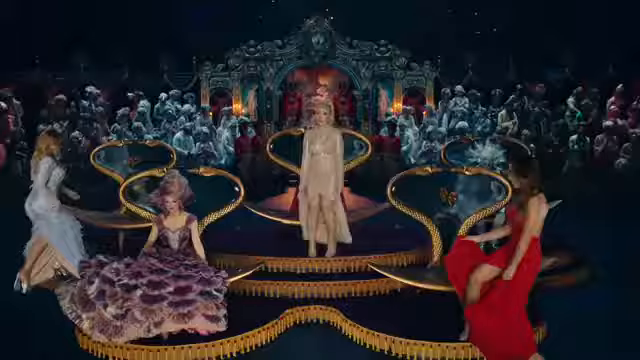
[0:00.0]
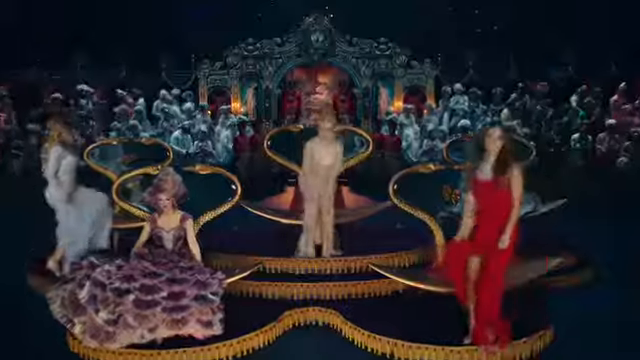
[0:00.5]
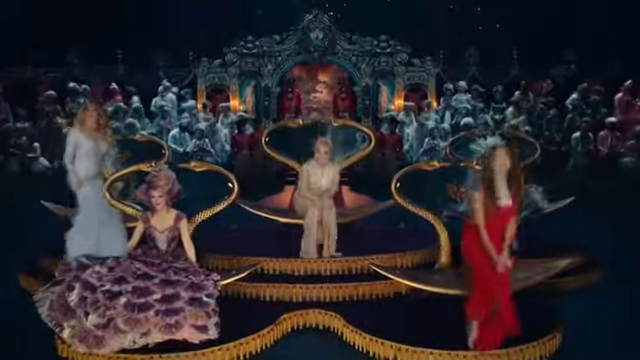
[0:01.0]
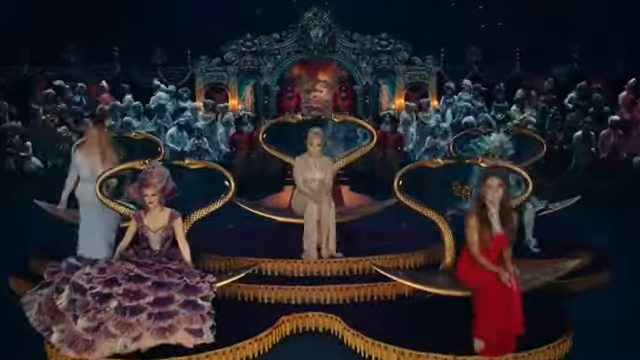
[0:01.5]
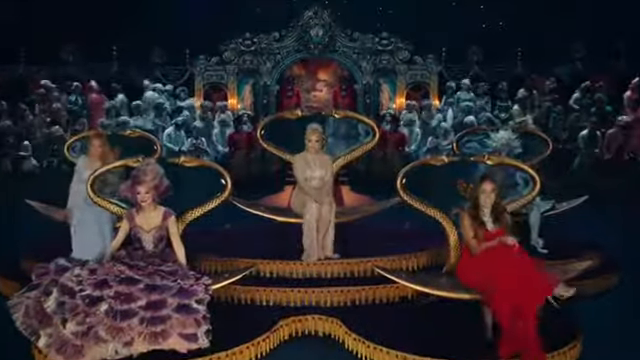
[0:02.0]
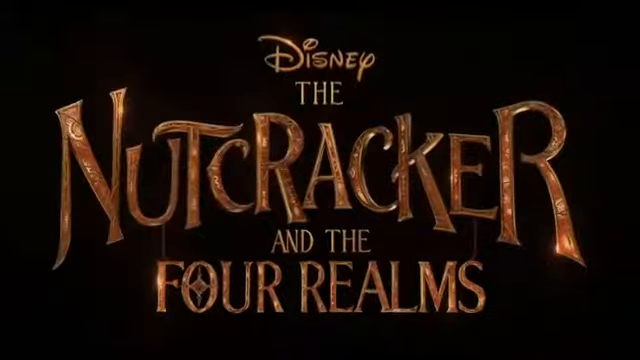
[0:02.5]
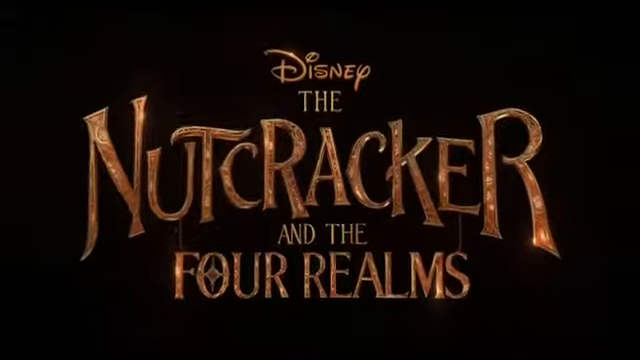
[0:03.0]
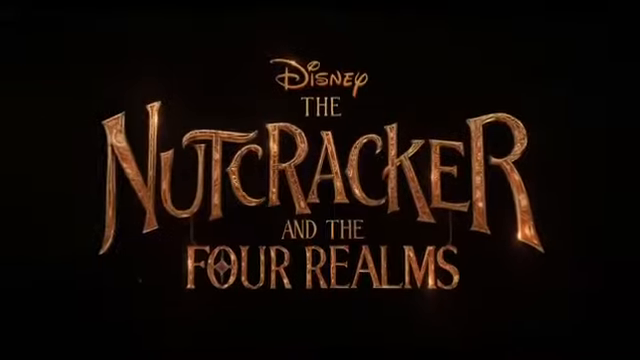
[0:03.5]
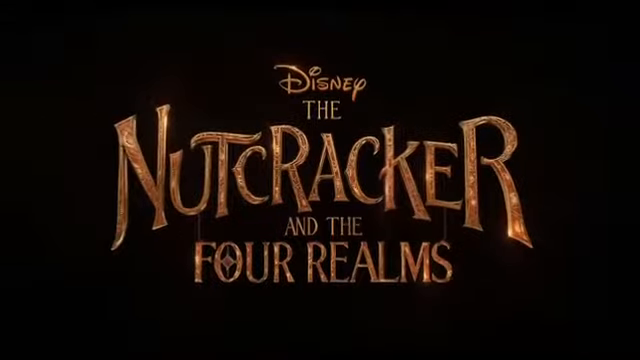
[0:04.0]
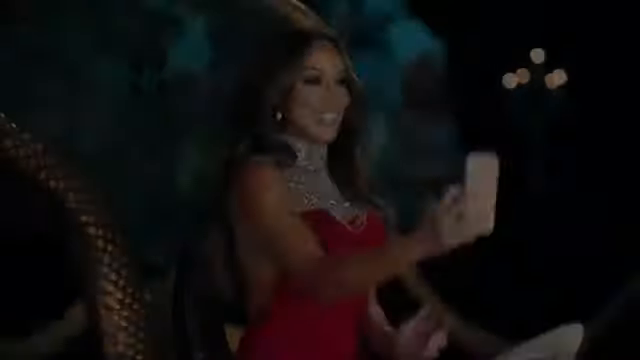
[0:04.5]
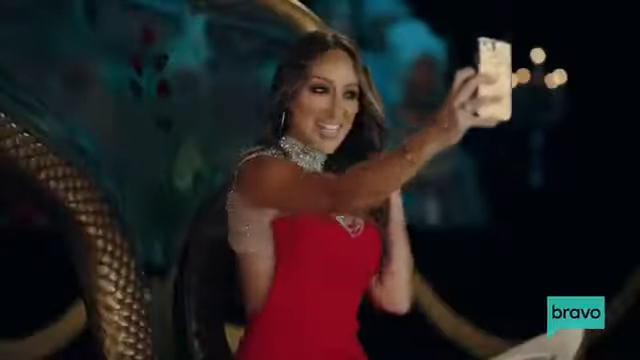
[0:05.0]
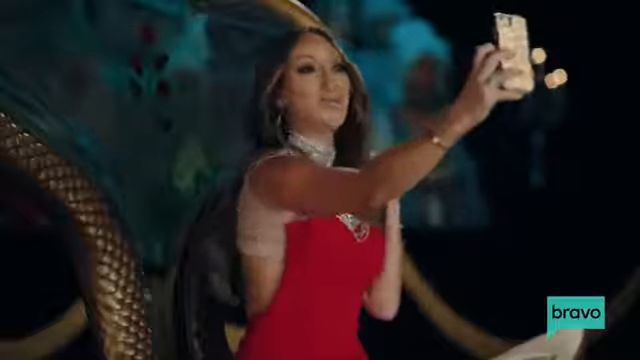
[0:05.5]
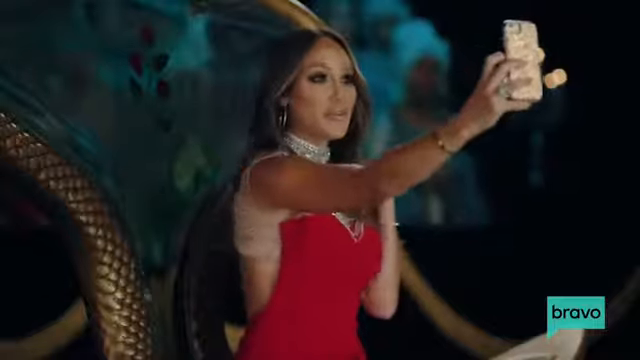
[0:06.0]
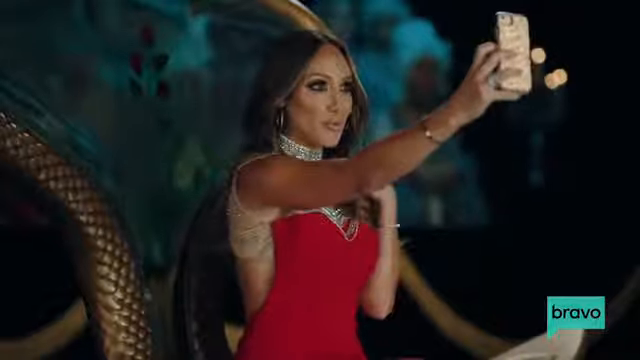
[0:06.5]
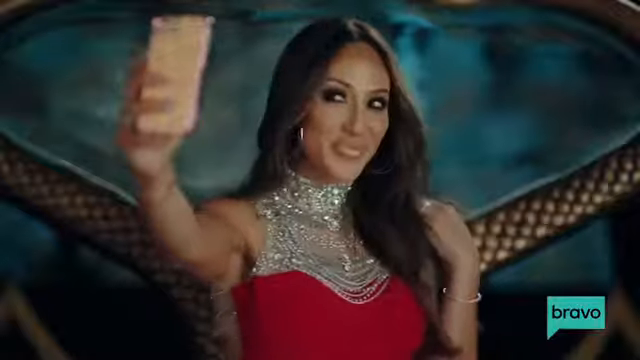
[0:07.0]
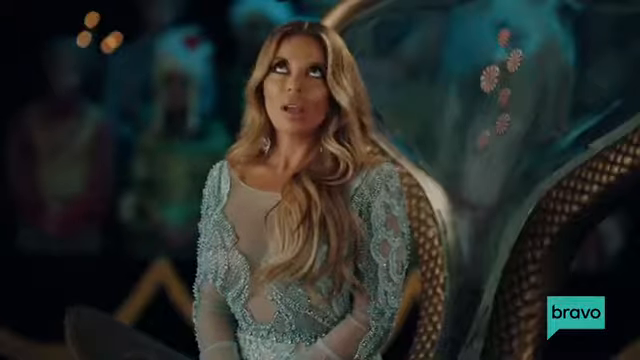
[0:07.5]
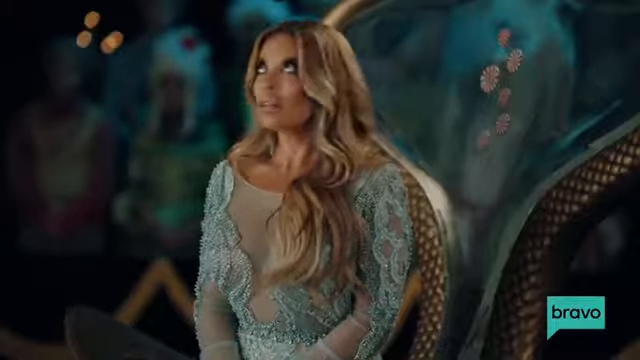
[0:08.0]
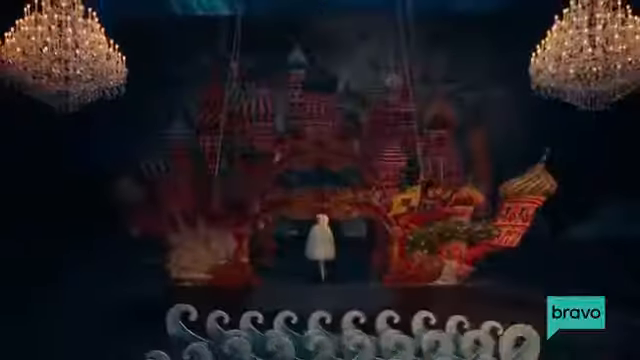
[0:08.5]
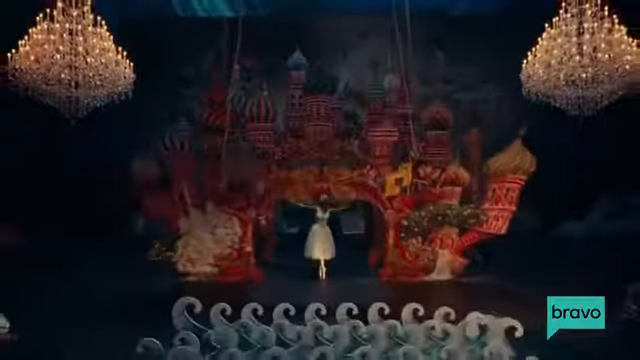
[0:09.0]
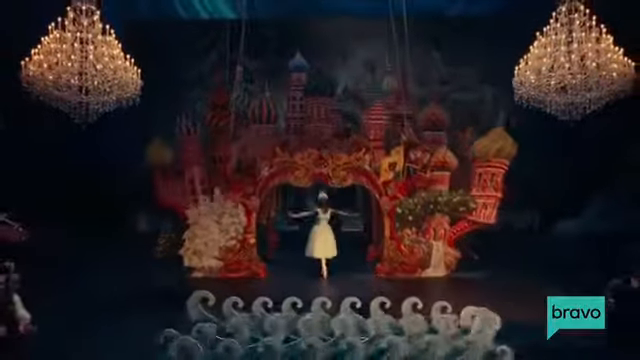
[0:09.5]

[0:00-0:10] What looks like an image from a show or a movie appears, with a very whimsical background and a stage area. Women wearing large gowns come and sit on chairs in the foreground. The video then cuts to what looks like a title card for Disney's The Nutcracker and the Four Realms. Next comes what seems to be a commercial for Bravo, with "Bravo" visible at the bottom right. A woman, apparently from one of the Housewives franchises, holds out a camera in her right hand and takes a selfie. It cuts to a different woman rolling her eyes, then to the other women, including a quick shot in which they appear to be pulling up a background, like a set piece, and putting it in place.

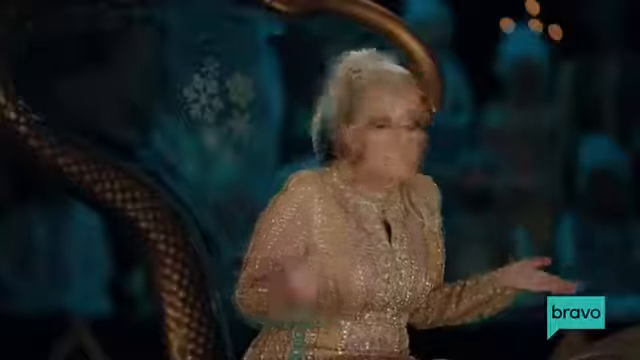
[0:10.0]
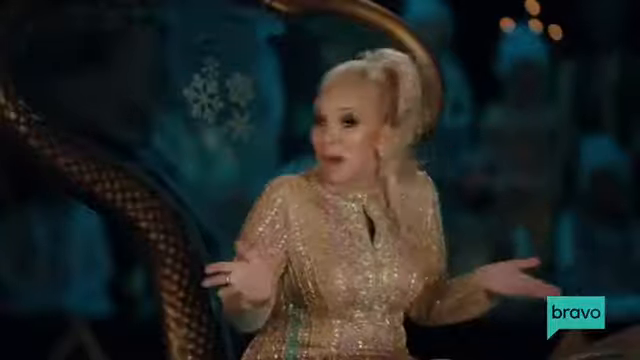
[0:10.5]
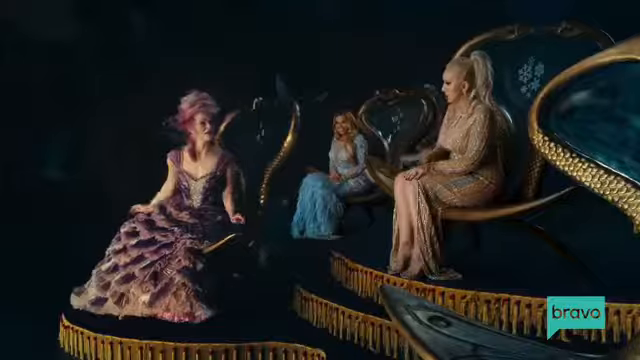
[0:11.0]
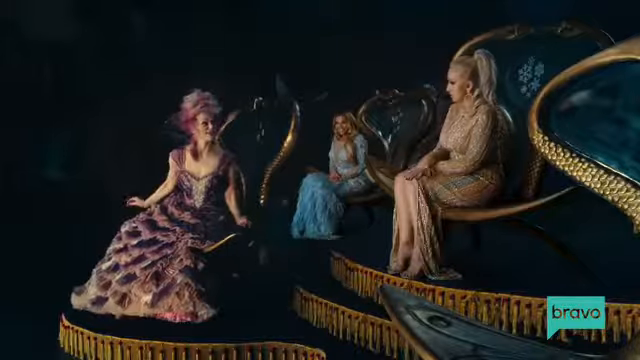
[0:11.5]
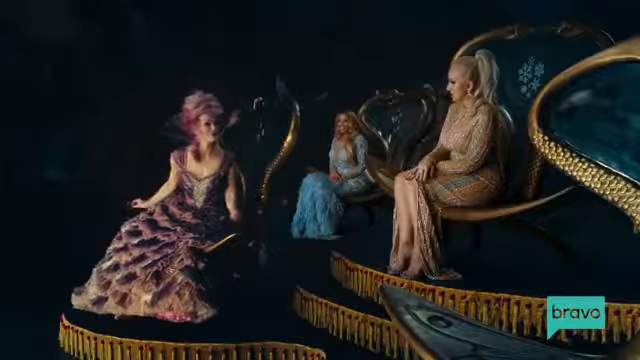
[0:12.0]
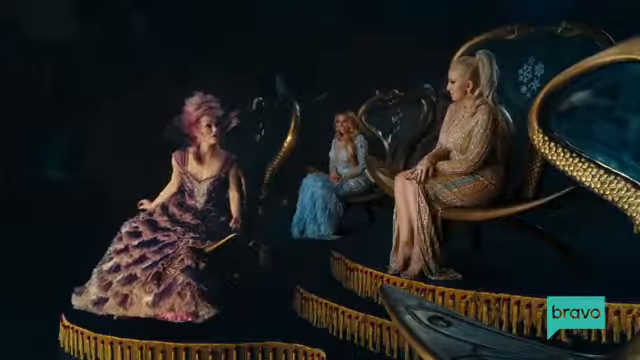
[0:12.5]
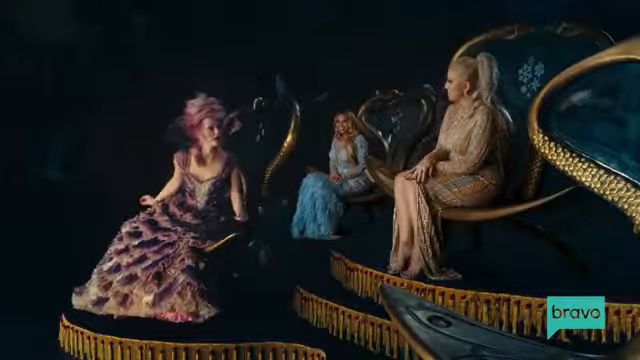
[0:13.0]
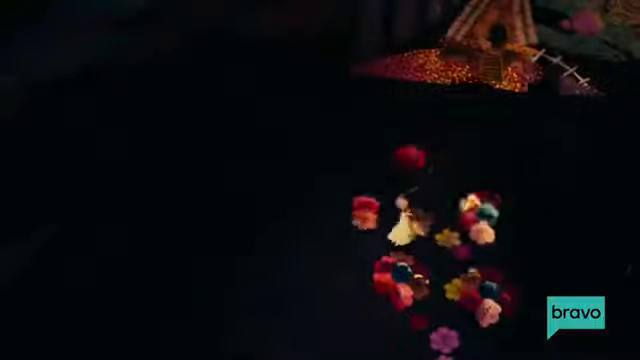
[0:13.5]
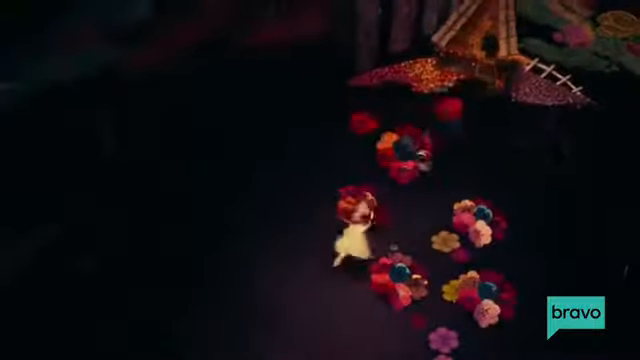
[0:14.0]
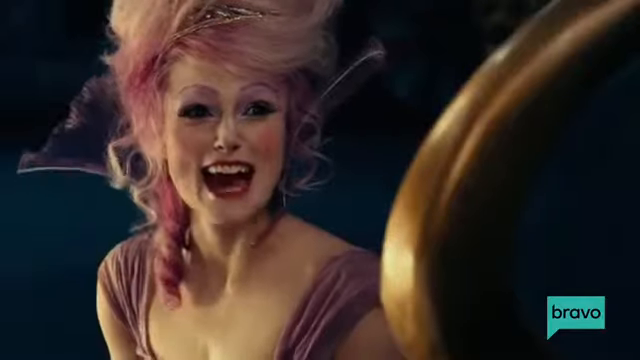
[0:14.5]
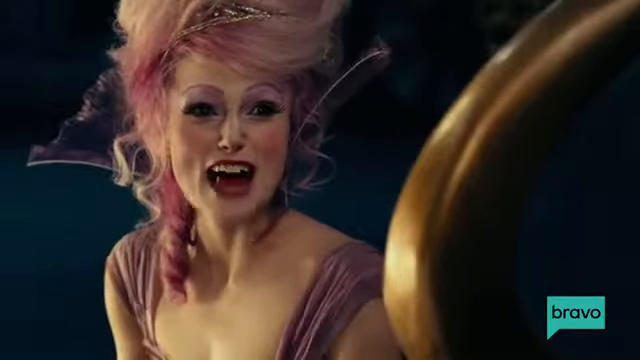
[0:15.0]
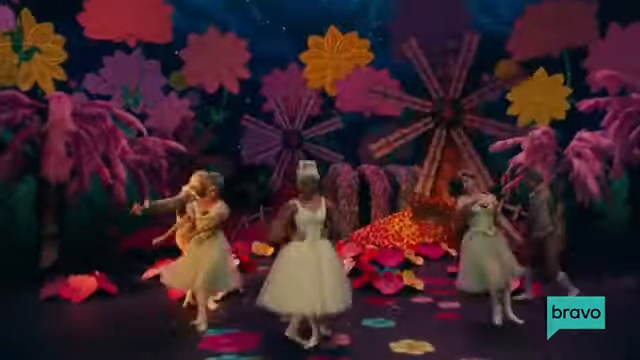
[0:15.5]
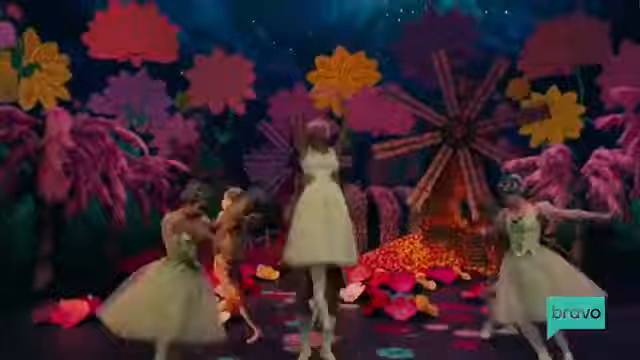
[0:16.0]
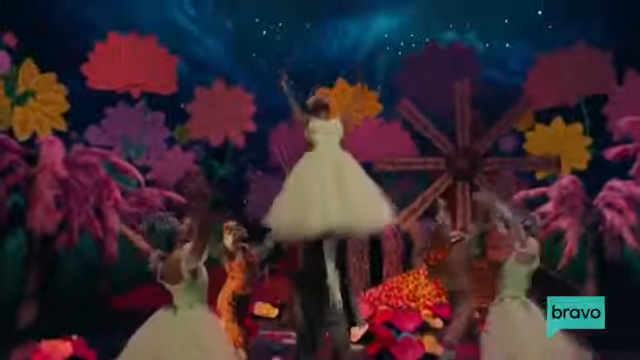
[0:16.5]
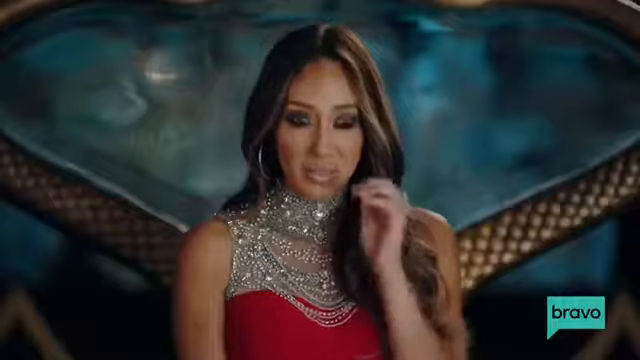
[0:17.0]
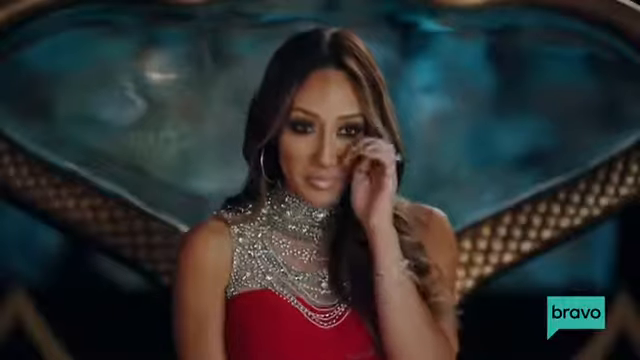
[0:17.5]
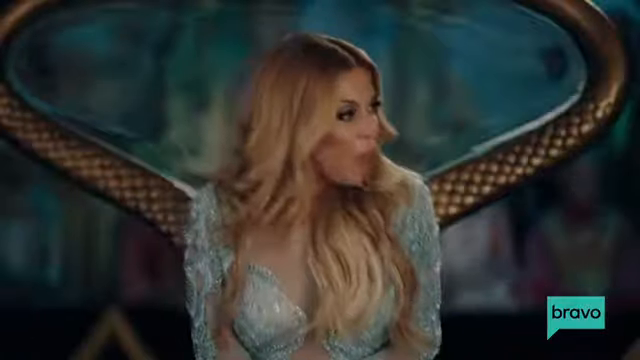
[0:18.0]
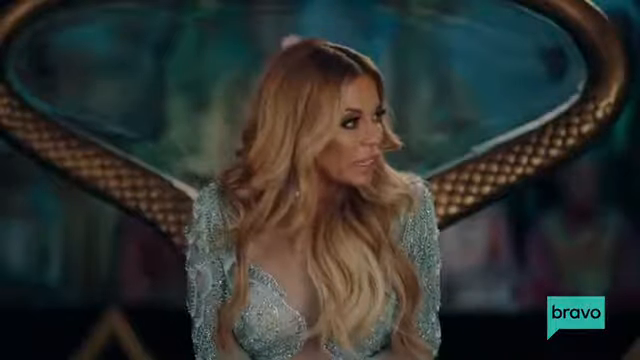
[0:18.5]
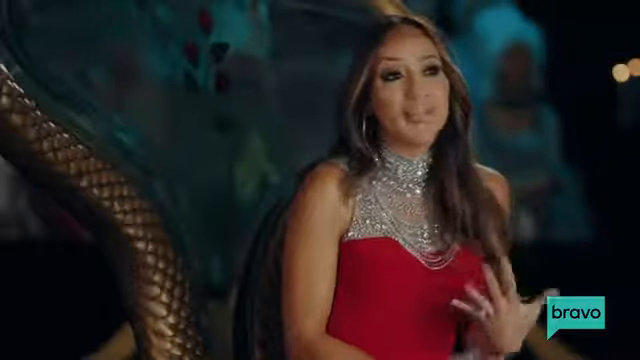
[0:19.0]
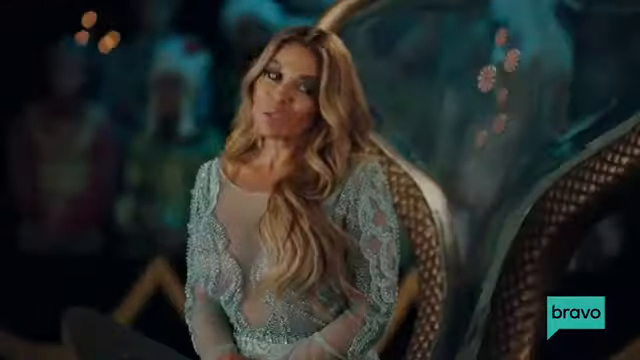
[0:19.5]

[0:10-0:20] Another woman, who was sitting on one of the chairs or thrones, has her hands splayed outward with her palms facing the sky; she looks very confused, as if asking what someone did or what they are doing. Another woman, who seems to be in the middle like the leader, is shown talking back to her, leaning toward the right side of the screen and looking up at her. Footage follows of what looks like someone on a stage, with flowers lighting up as the person walks by, in what seems to be an overhead shot. A close-up then shows the woman who seems to be in the middle of everything looking at a mystical fairy-like person with purple hair, a crown and heavy makeup. She looks to be quite happy.